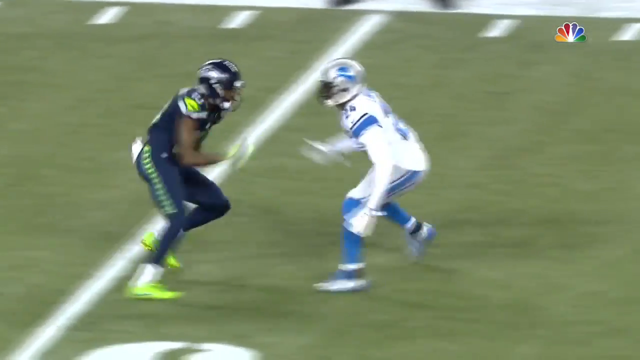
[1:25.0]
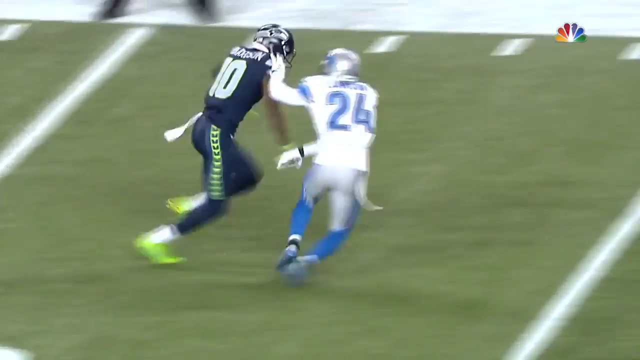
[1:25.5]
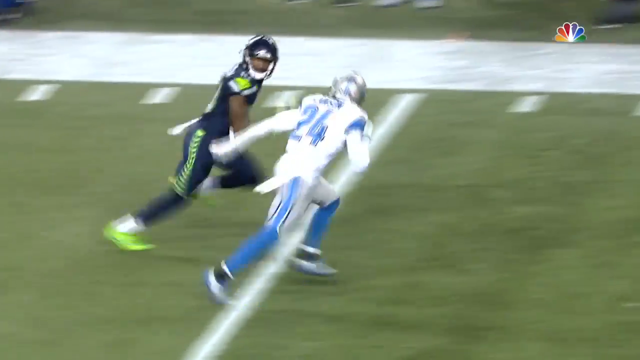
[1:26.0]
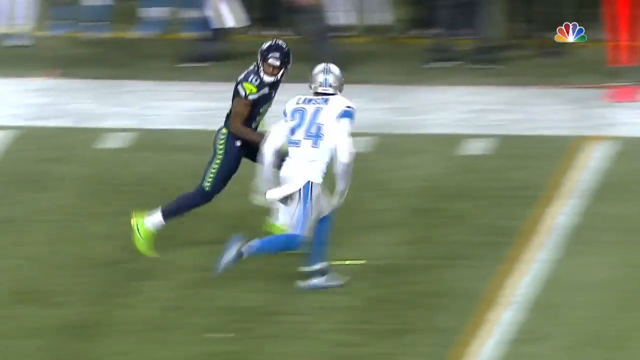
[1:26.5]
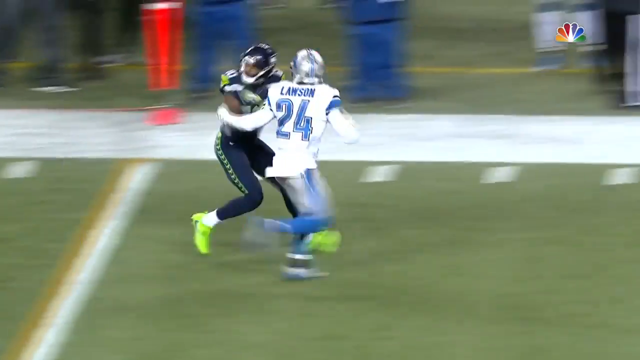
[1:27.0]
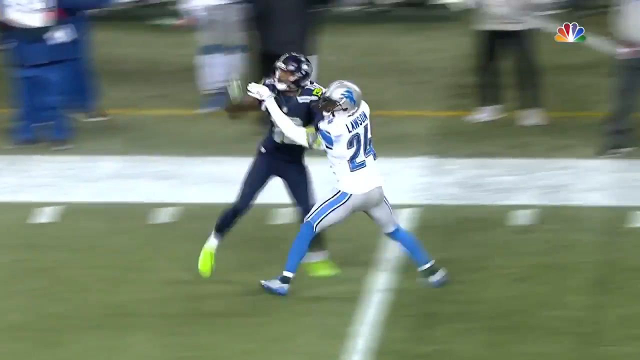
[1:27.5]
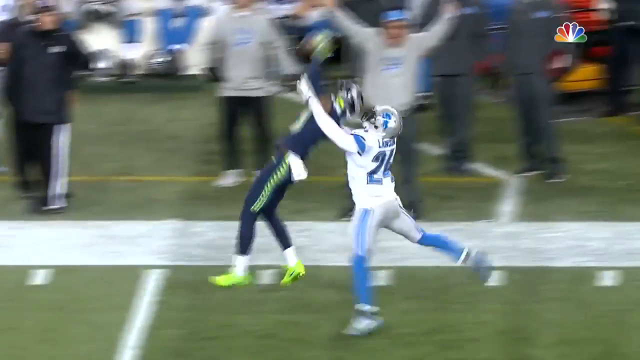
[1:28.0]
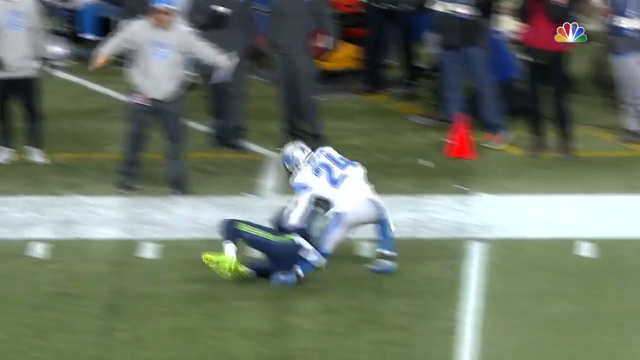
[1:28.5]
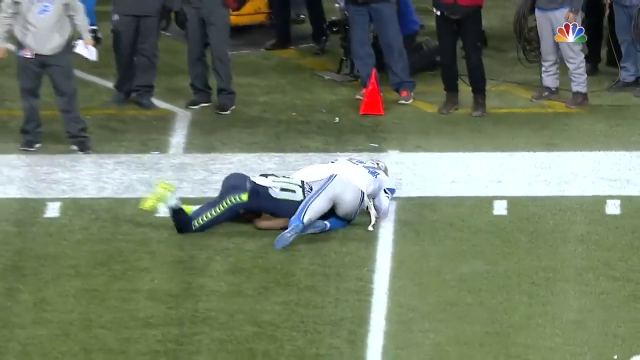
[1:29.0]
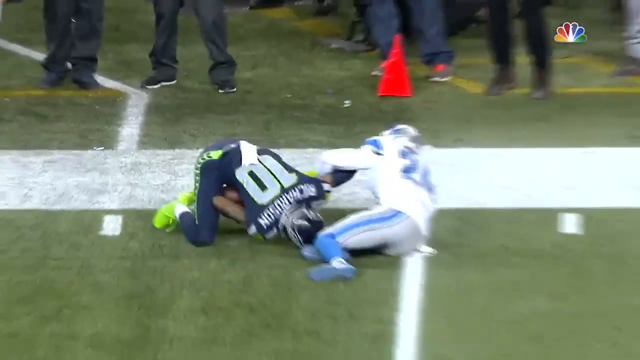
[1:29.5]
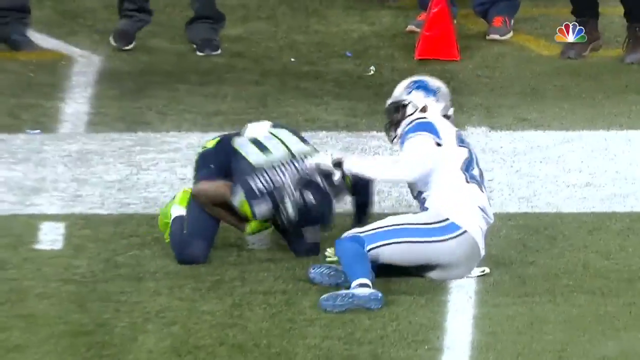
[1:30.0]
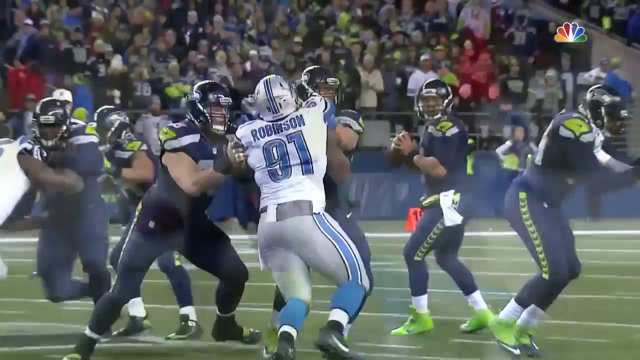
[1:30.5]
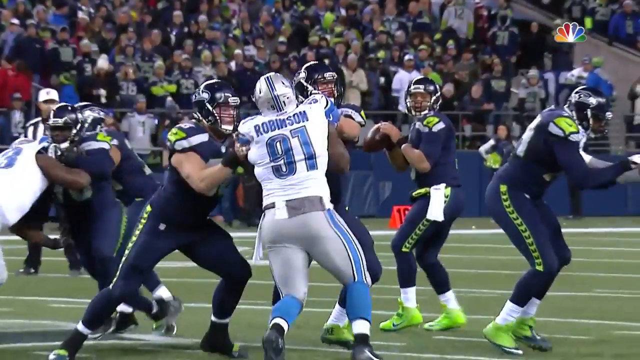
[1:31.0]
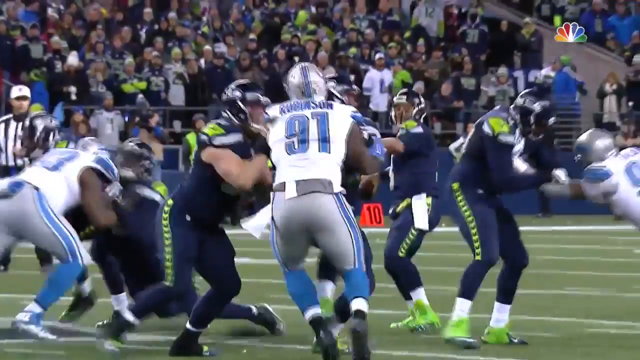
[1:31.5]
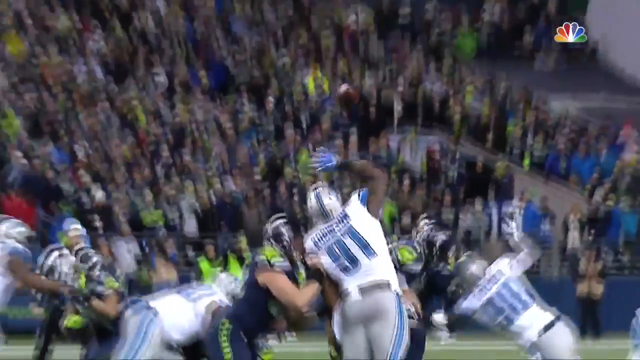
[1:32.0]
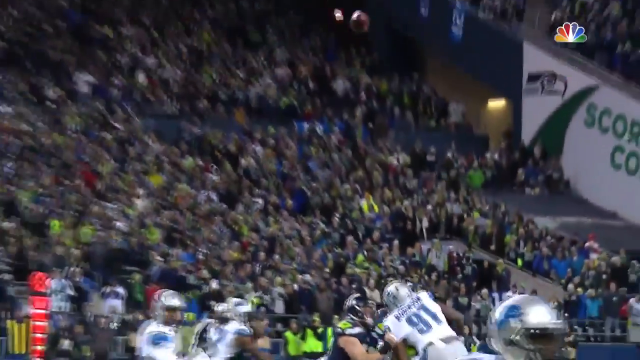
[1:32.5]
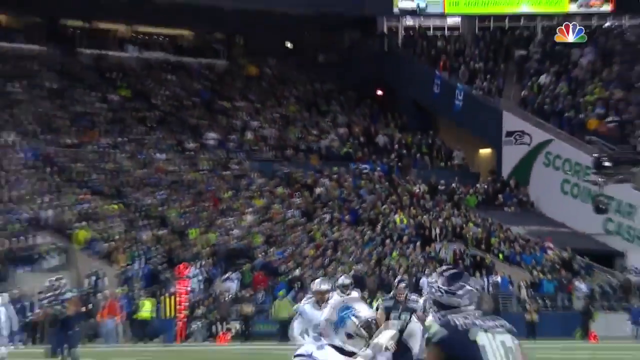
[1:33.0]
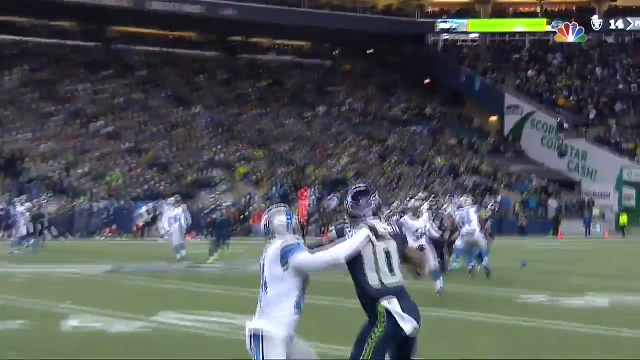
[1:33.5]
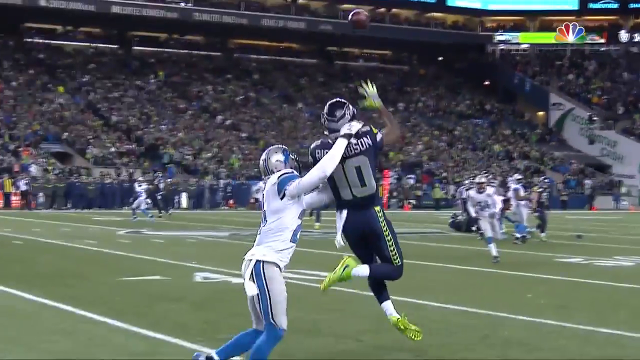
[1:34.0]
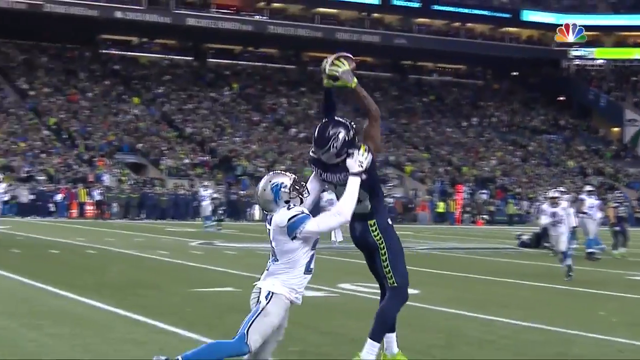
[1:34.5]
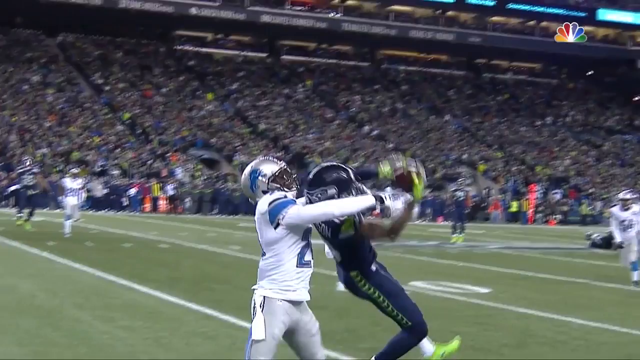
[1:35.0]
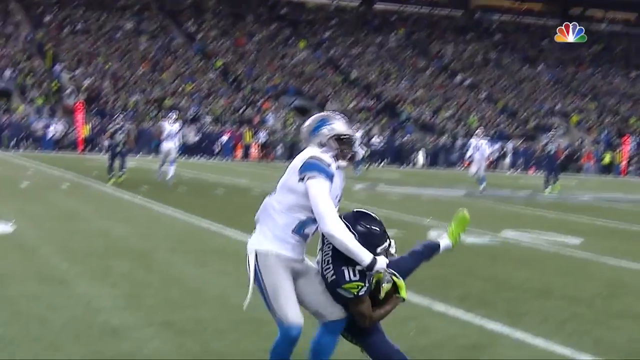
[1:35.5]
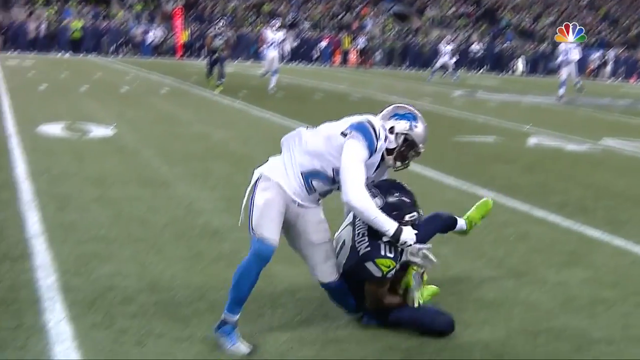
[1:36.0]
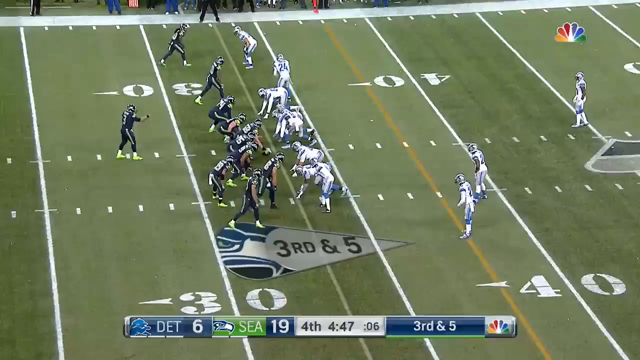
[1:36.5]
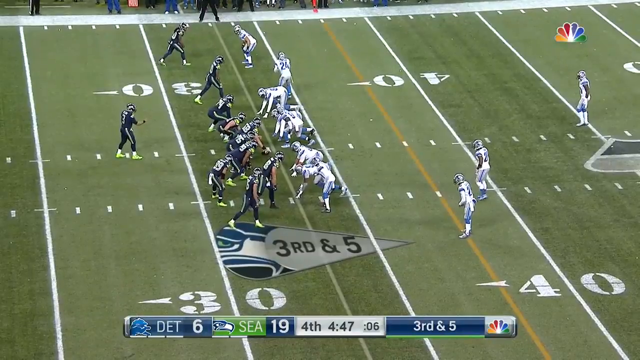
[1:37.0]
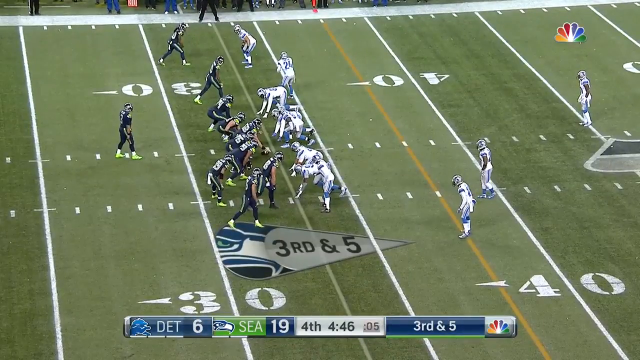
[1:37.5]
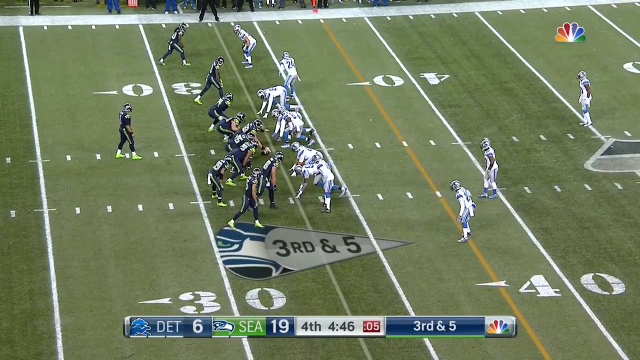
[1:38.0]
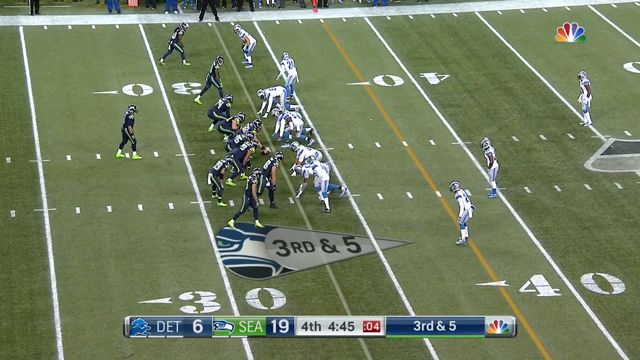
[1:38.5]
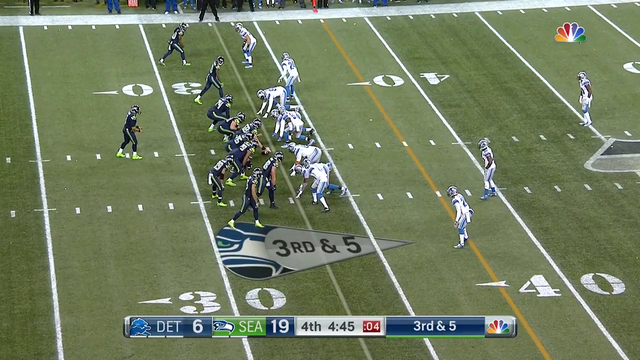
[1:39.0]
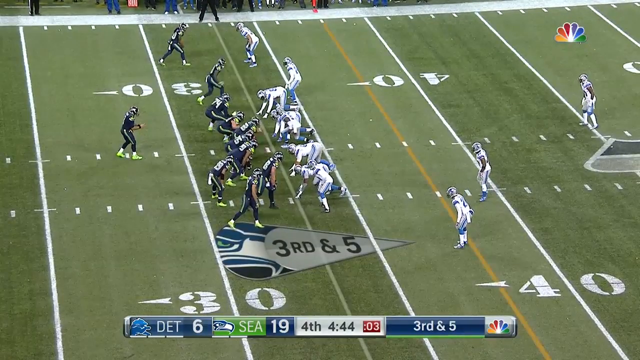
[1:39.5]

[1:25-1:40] A replay shows Richardson, Seahawks number 10, running down the field while Lions number 24, Lawson, guards him. Richardson quickly turns around and, although he is being grabbed, jumps very high in the air, catches the ball, and comes down with it right in front of Lawson. A different angle shows Russell Wilson, number 3, throwing the ball high in the air as the offensive and defensive linemen battle around him; Richardson, seen from behind, catches it and quickly brings it in to secure the catch. The next play is at the Seahawks 33-yard line, with the score Detroit Lions 6, Seattle Seahawks 19, in the fourth quarter with 4 minutes and 47 seconds left. There appear to be 6 seconds on the play clock, it is 3rd and 5, and the Seahawks are lined up on the left with Detroit on the right. The ball is hiked to Russell Wilson, who drops back.